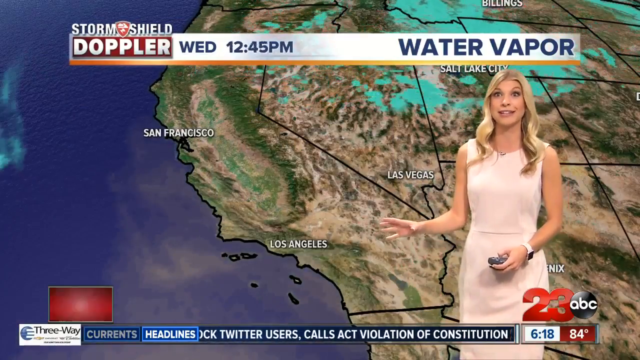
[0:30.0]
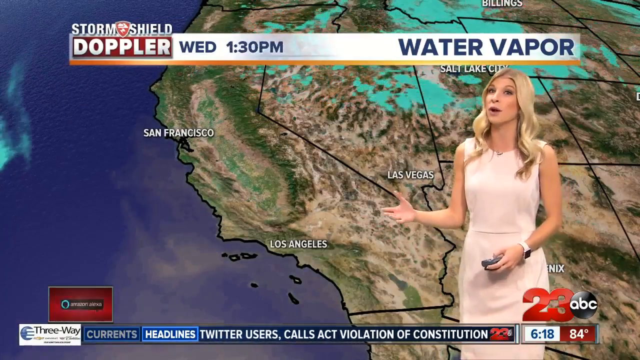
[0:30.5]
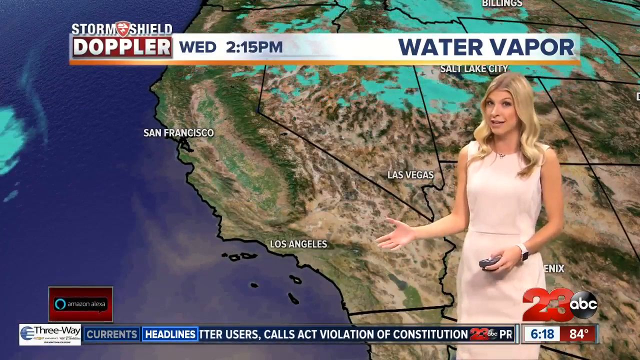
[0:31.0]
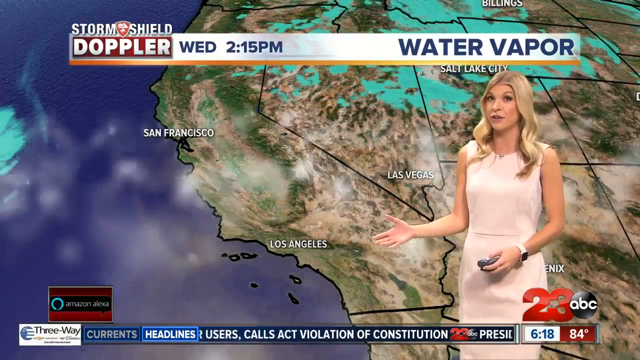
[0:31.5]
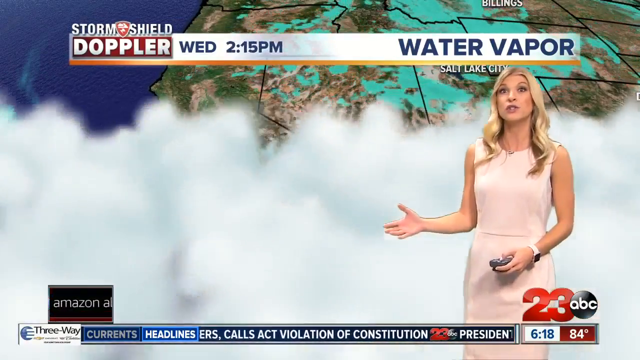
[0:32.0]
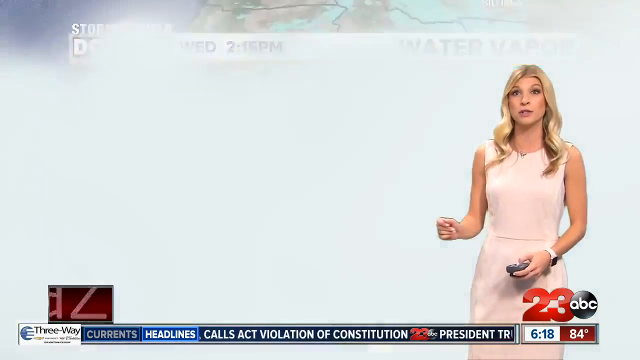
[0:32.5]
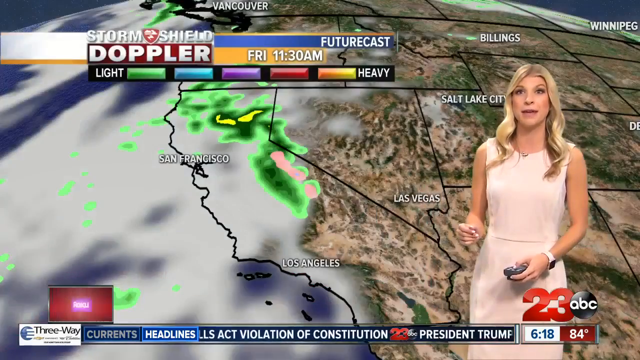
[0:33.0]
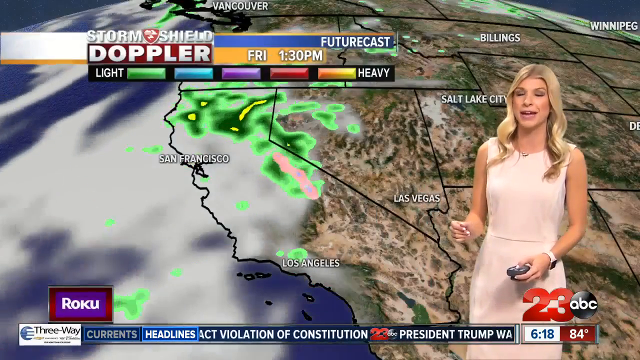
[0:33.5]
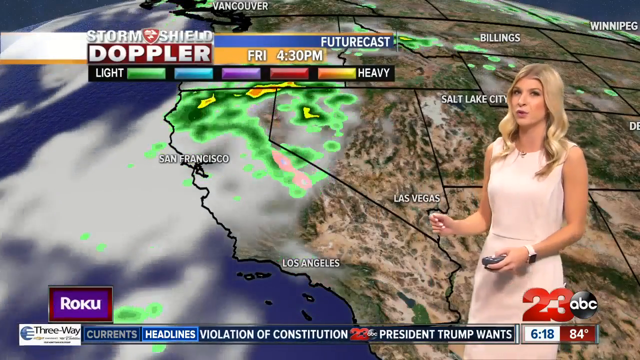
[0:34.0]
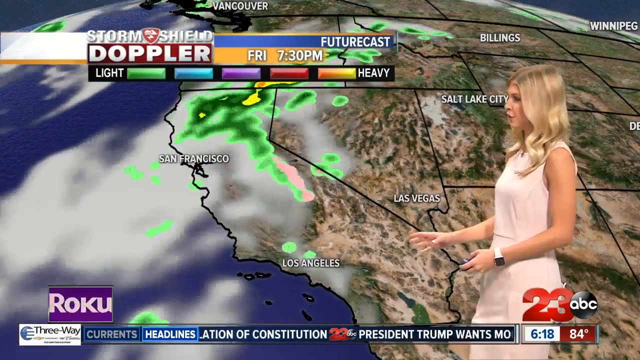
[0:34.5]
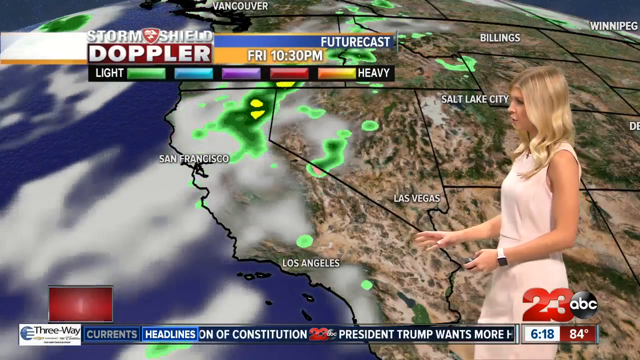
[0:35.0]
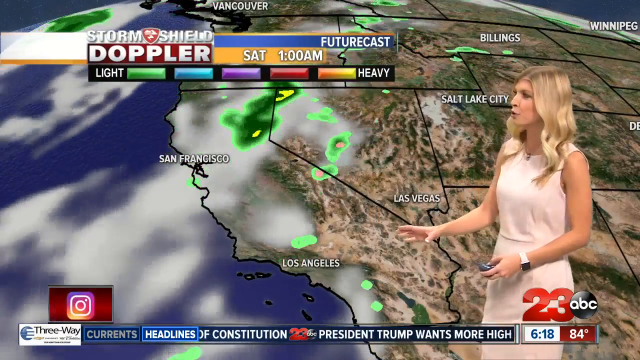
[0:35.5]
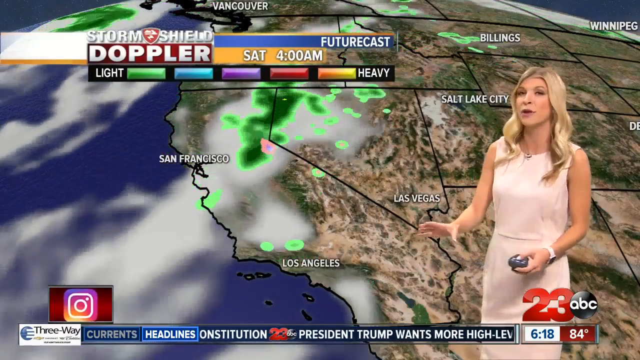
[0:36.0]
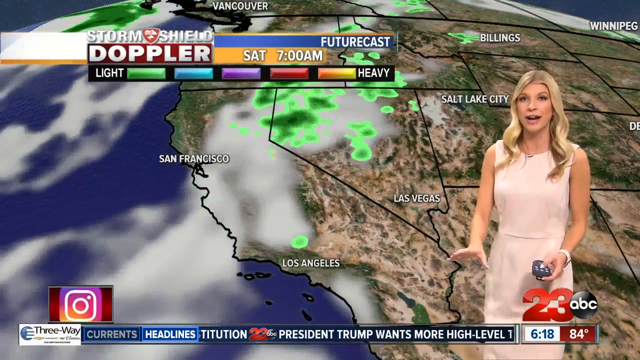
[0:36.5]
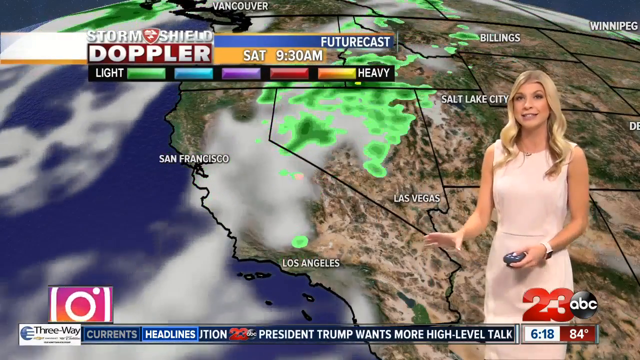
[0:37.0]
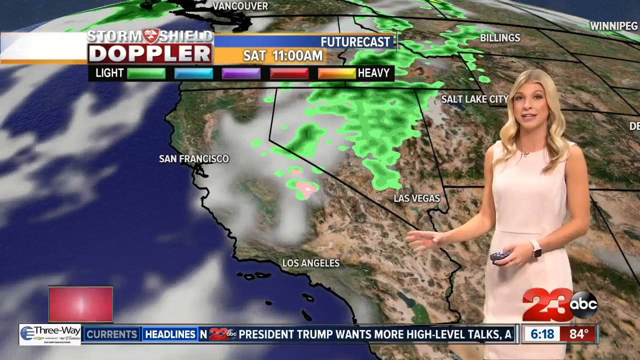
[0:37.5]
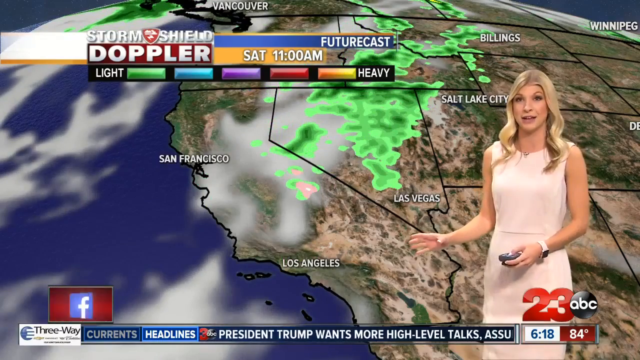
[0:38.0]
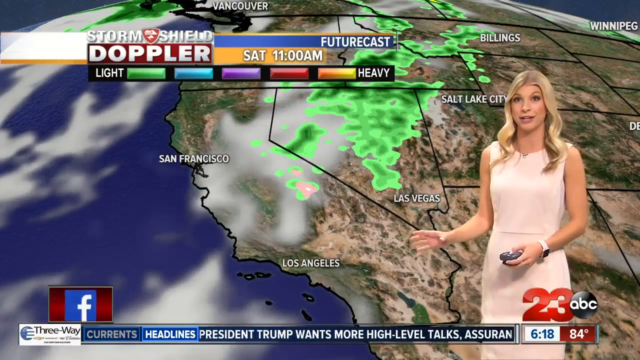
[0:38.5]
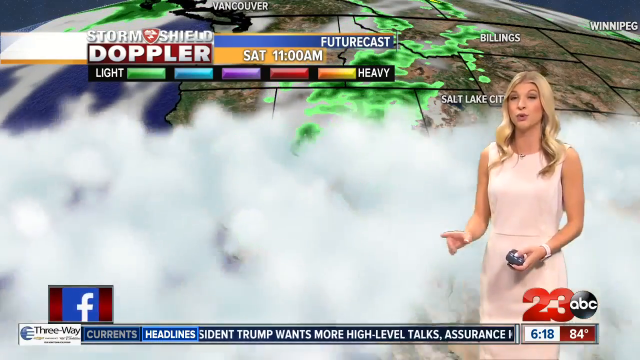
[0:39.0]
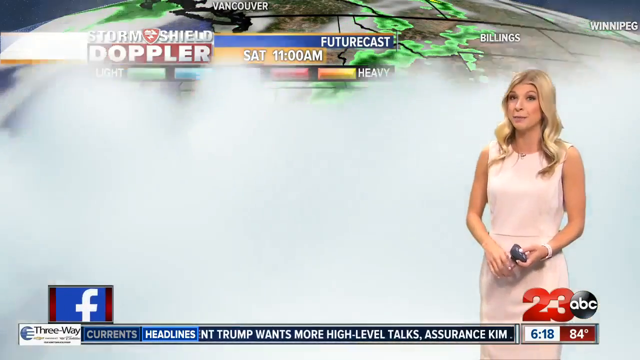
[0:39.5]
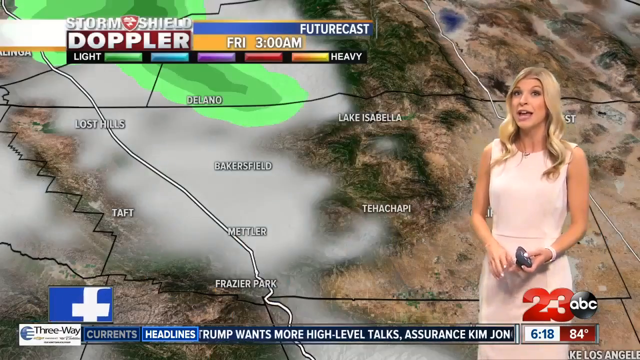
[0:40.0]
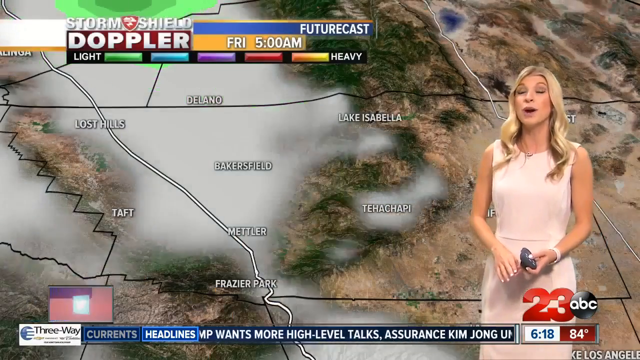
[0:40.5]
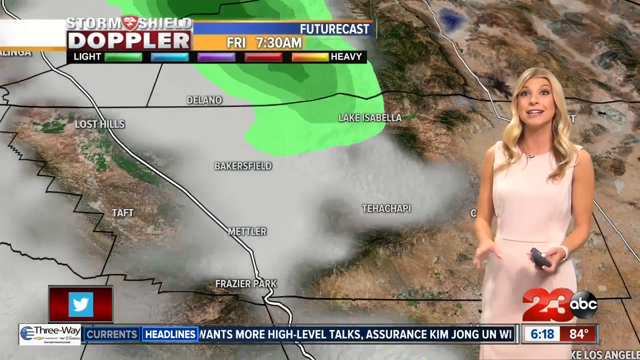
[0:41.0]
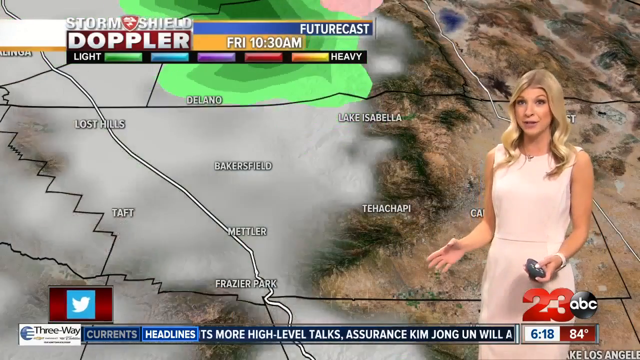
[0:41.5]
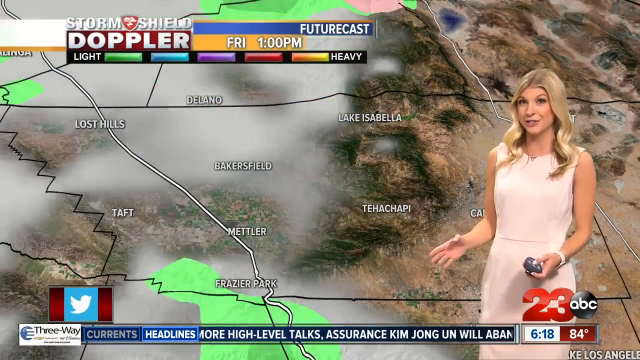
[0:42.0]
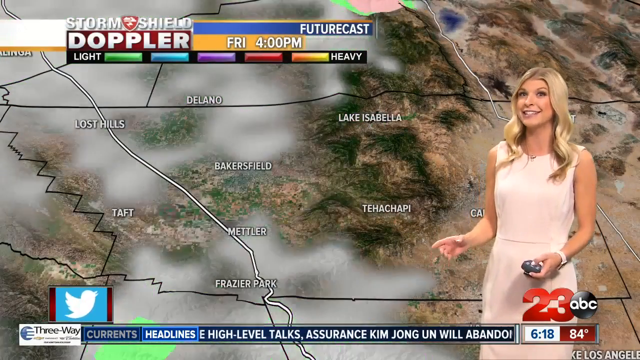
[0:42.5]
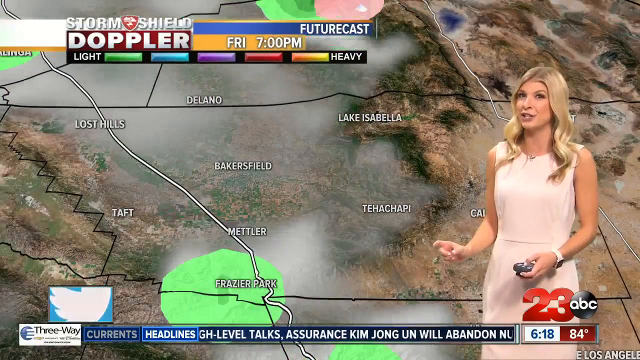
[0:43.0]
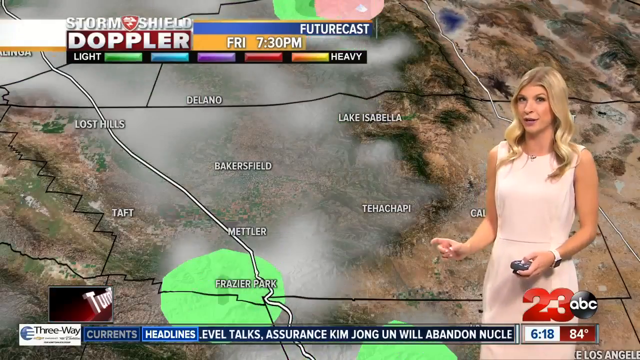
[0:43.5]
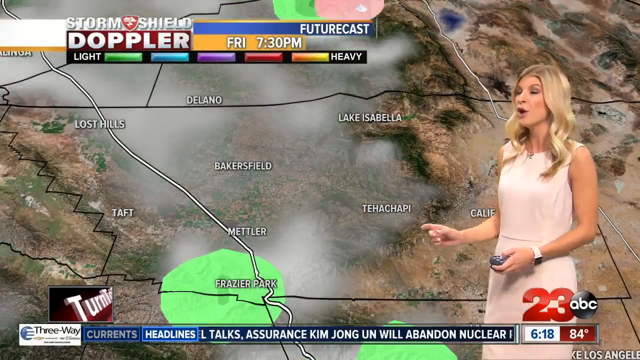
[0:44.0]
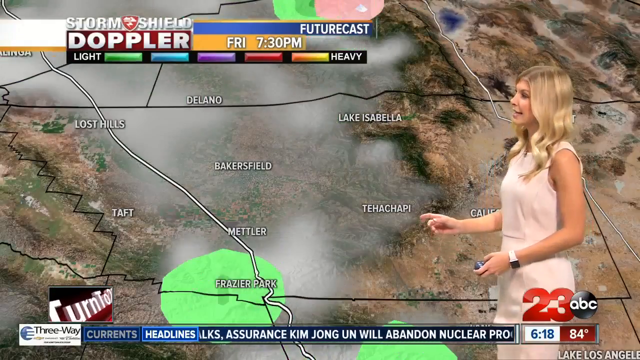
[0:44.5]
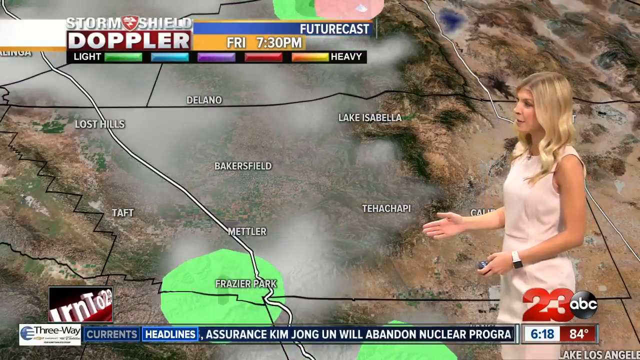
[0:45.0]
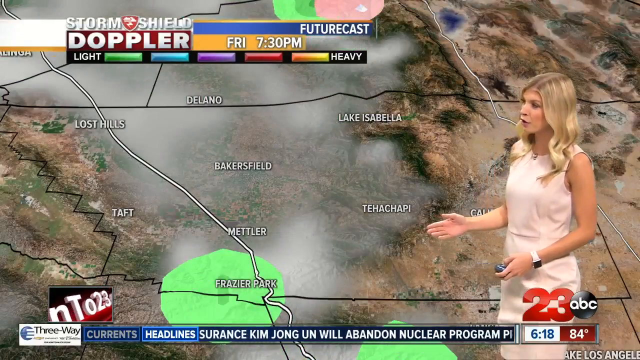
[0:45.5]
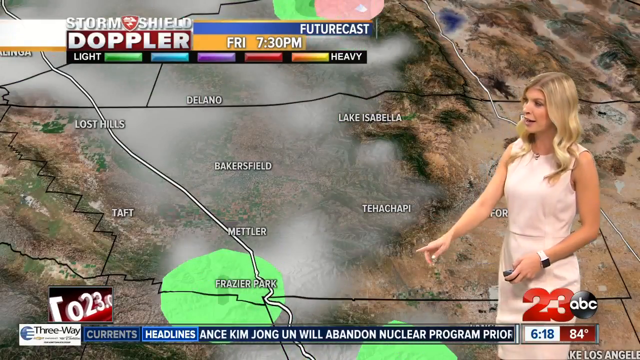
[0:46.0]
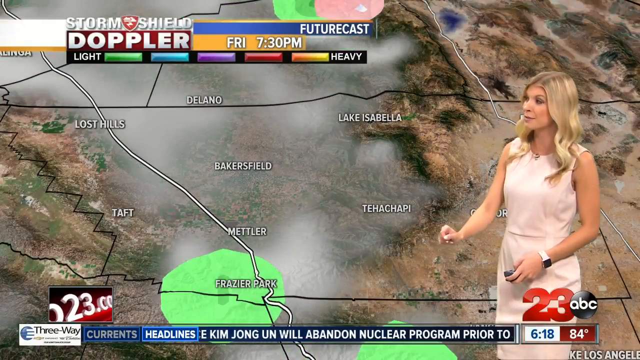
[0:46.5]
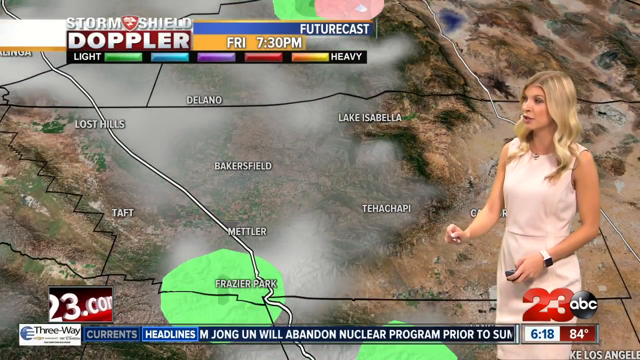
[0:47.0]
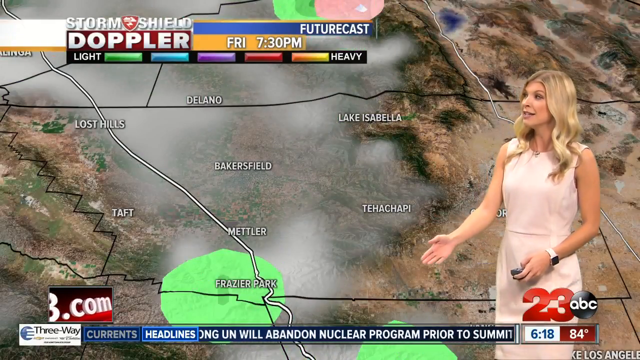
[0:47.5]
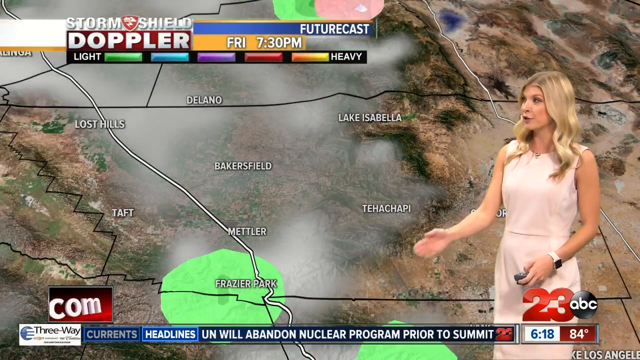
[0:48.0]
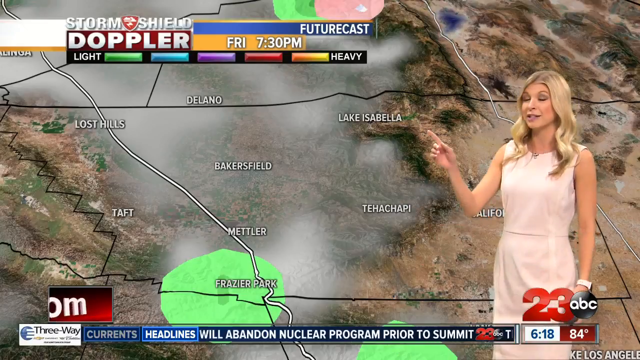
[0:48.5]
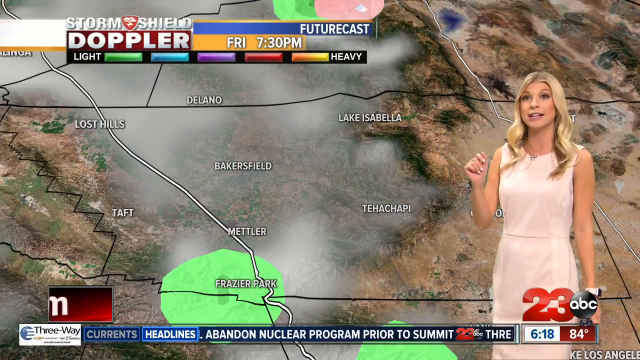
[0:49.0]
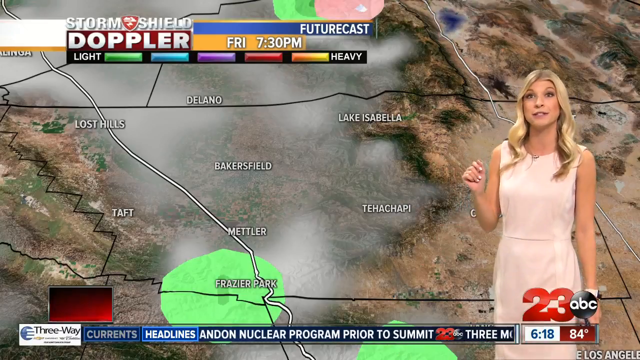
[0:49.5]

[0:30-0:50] The reporter shows a map of the west coast of the United States with what appears to be a title reading "Water Vapor". It shows mostly California, with San Francisco, Los Angeles, Las Vegas and New York City. An animation of what seems to be smoke or clouds follows, and then the same satellite view appears, apparently with a Doppler effect, and a "futurecast" caption. The area over San Francisco is overcast with clouds, Los Angeles too but less so, and Las Vegas just a little. The Doppler effect shows some areas of San Francisco heavily affected by rain, though mostly it is light. During the day the same storm seems to move toward Las Vegas, Salt Lake City and Billings. Another animation shows clouds coming from the back to the front of the screen. Then a close-up of an area with counties or cities appears, showing Delano, Lost Hills, Bakersfield, Lake Isabela, Metlor, Fraser Park and two more cities whose names are unreadable because the font is too small. Bakersfield in particular is overcast with clouds, and the clouds seem to be moving north along with the storm.